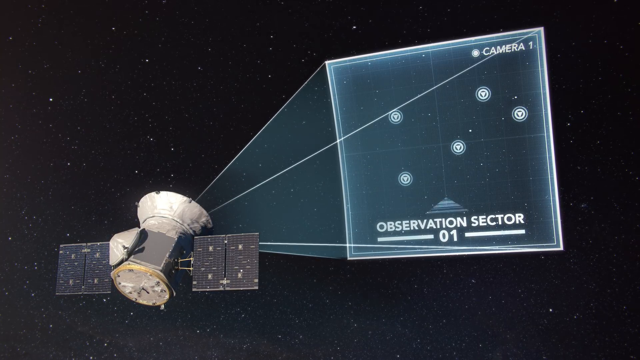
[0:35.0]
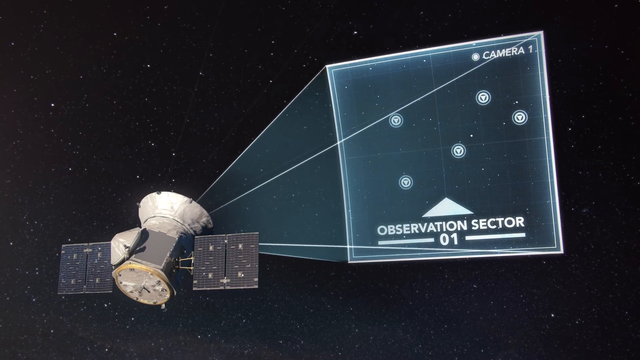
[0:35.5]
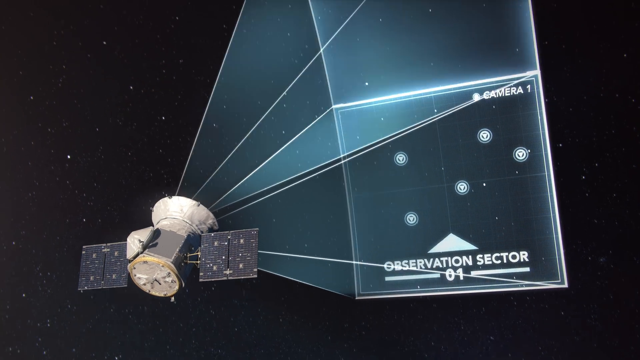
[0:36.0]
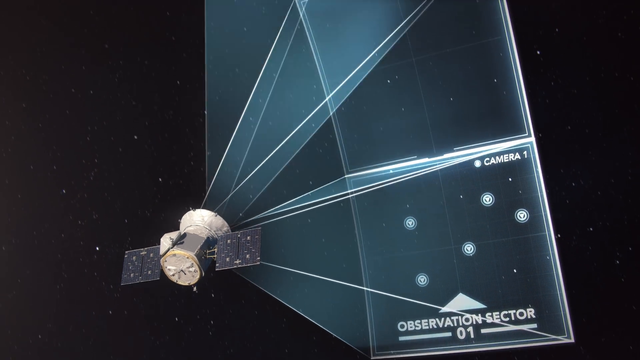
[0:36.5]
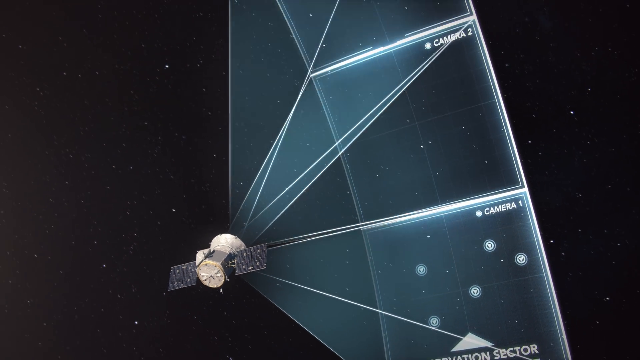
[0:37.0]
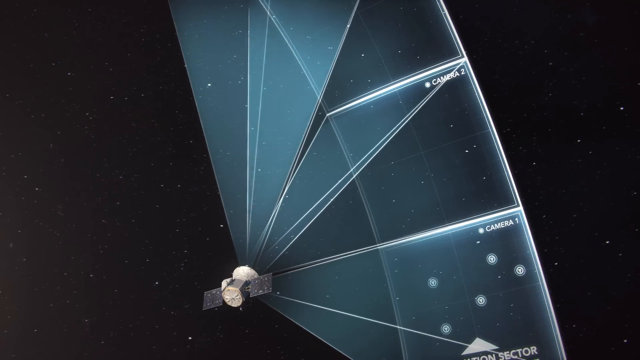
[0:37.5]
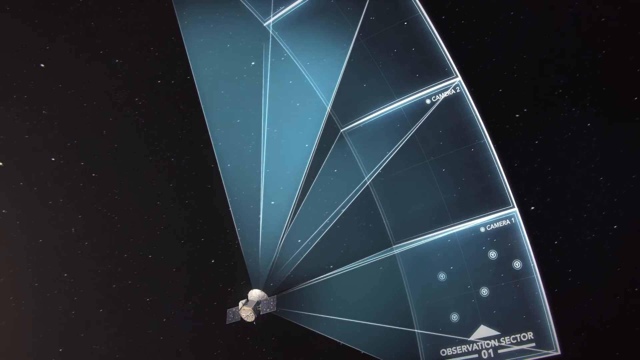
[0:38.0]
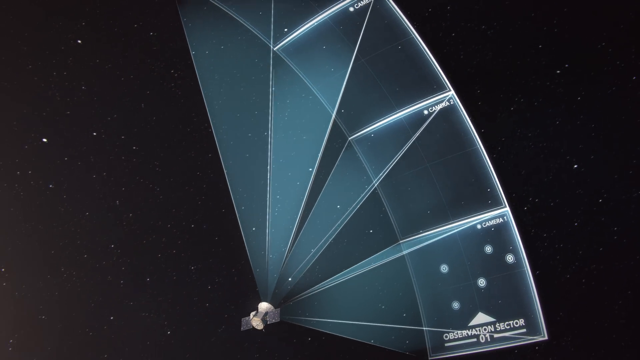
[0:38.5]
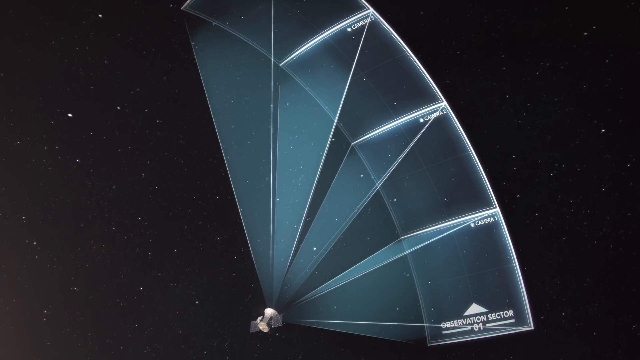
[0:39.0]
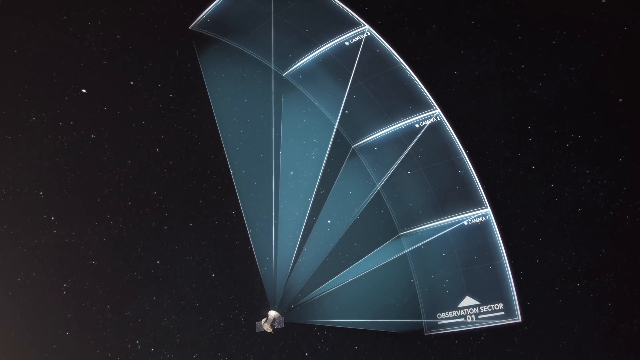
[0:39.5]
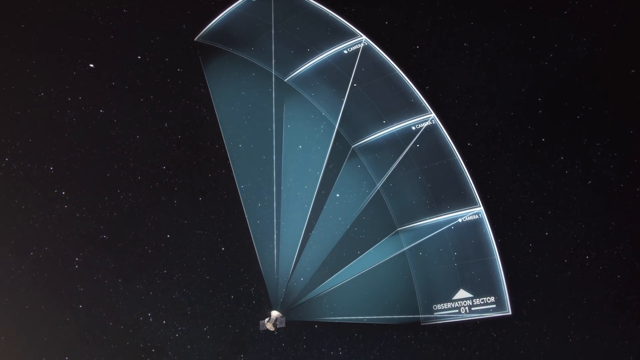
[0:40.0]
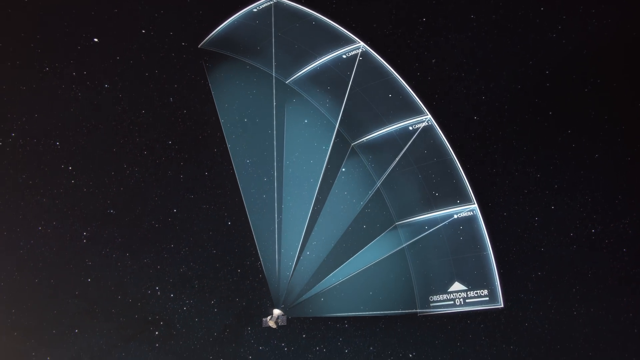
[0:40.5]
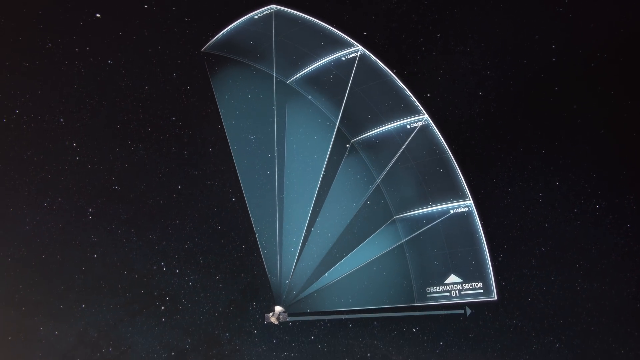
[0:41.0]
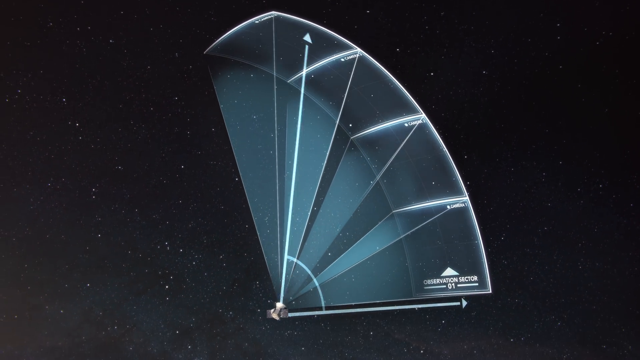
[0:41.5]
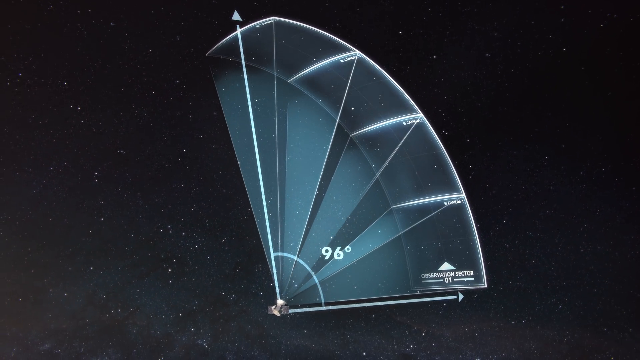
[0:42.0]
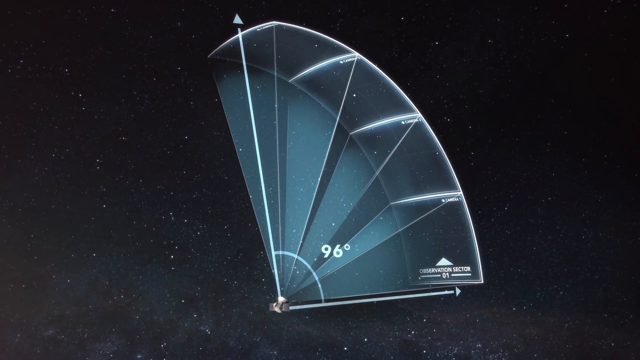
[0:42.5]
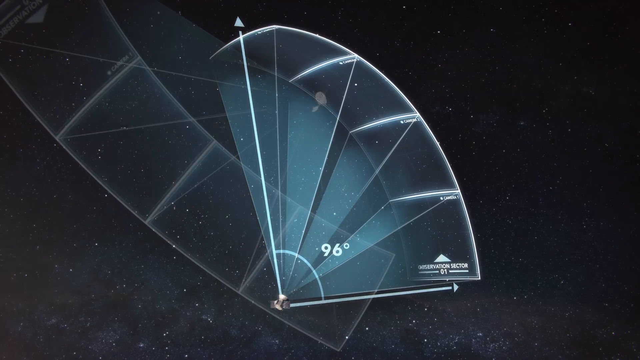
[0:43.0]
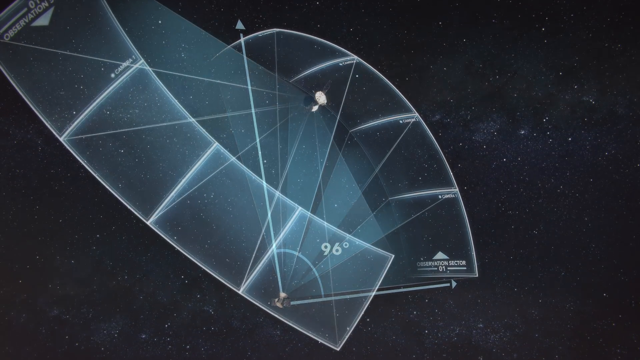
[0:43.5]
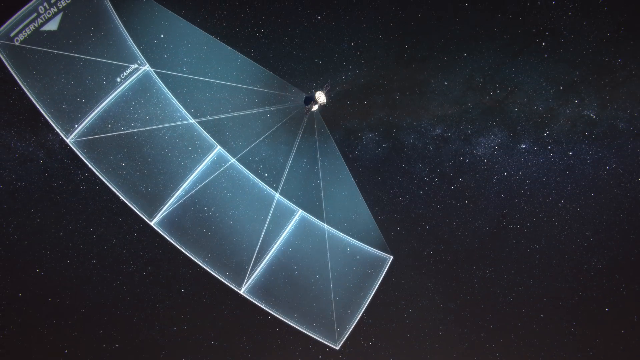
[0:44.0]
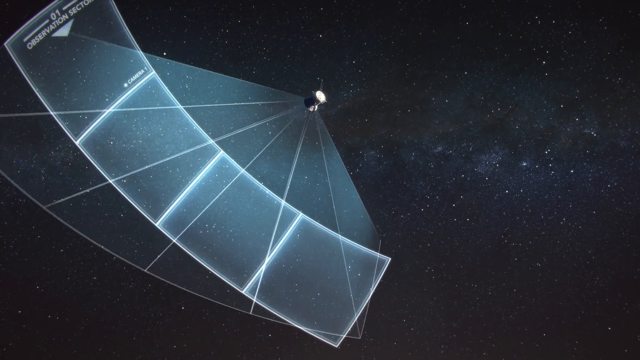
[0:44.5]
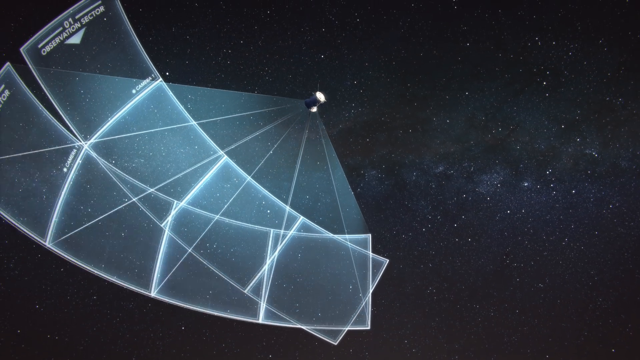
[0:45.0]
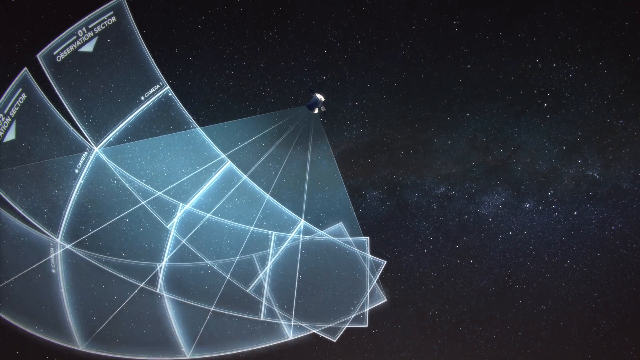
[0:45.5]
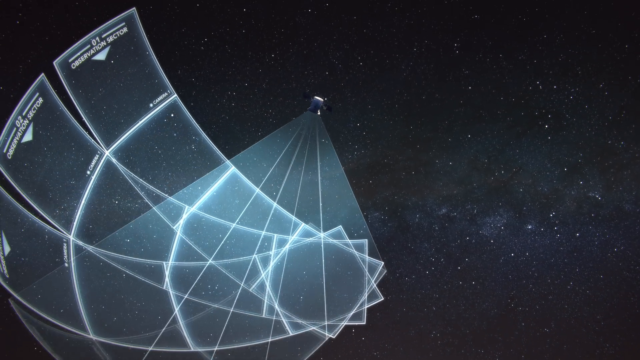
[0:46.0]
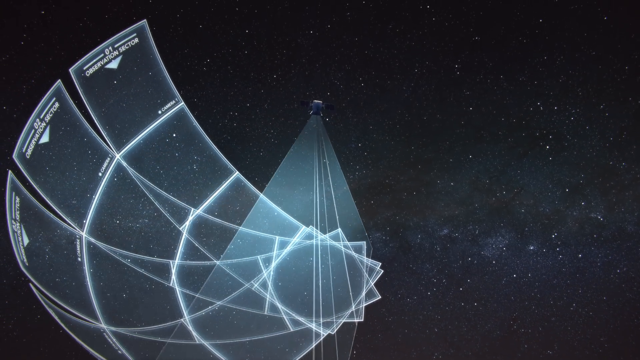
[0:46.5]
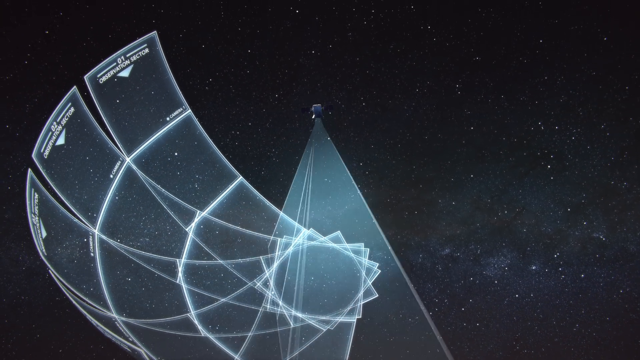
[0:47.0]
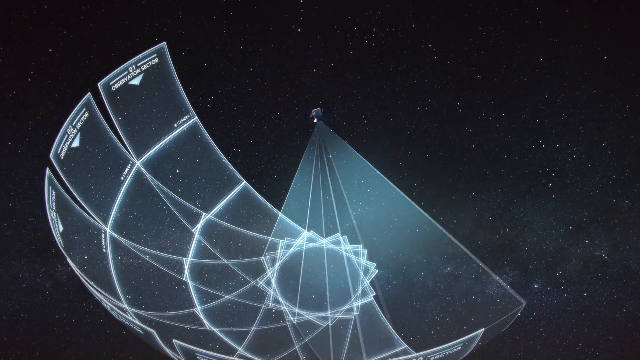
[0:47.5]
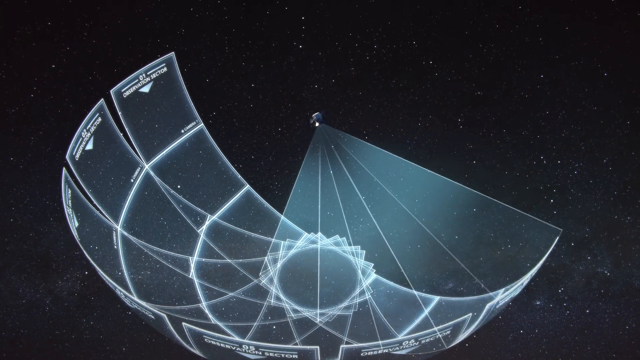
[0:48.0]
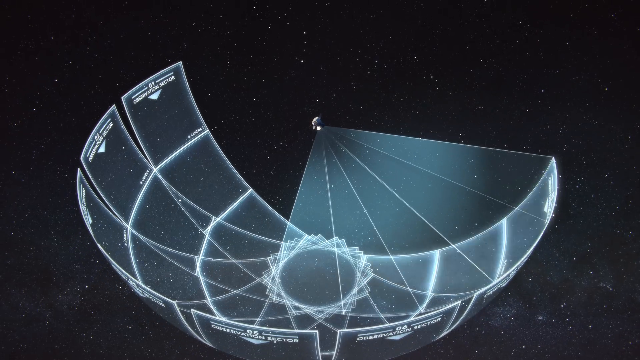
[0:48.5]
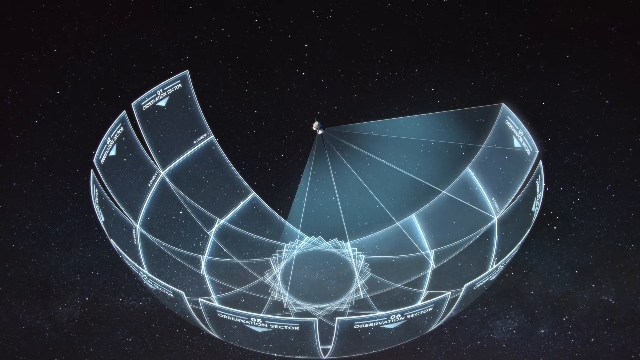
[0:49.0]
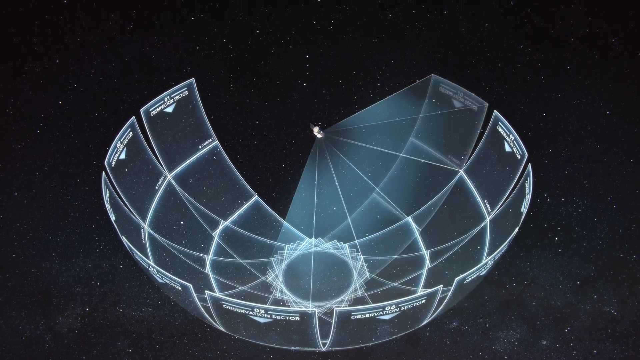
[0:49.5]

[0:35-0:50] In an animation of a satellite floating in outer space, the satellite projects what looks like a fan-shaped projection of light. Measurements are shown, with the measurement reading "96 degrees". The projection then moves from the right side to the left side and continues, mapping out a 3D projection all around the satellite. The satellite is shaped like a cylinder, and the 3D projection is made of segments forming a 3D circle or plane floating in space. The satellite itself is a silvery colour with grey wings.